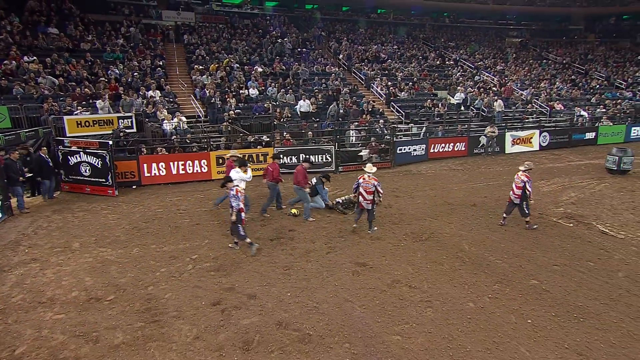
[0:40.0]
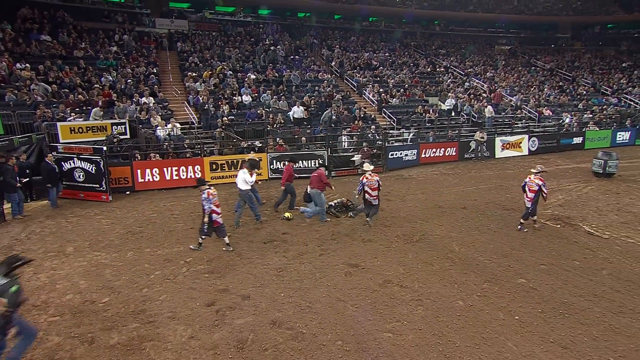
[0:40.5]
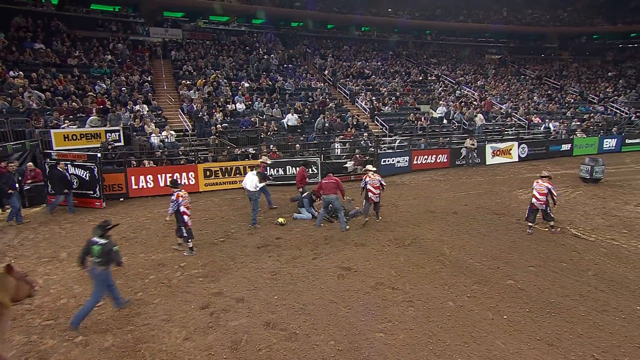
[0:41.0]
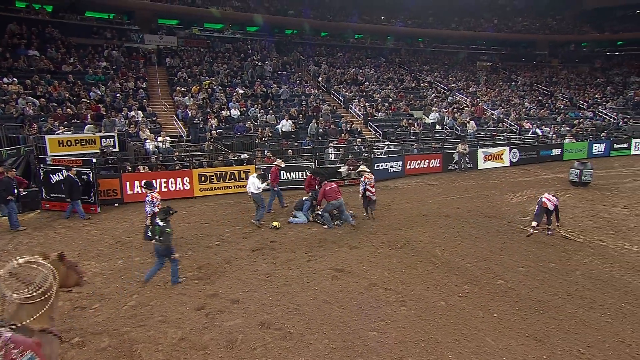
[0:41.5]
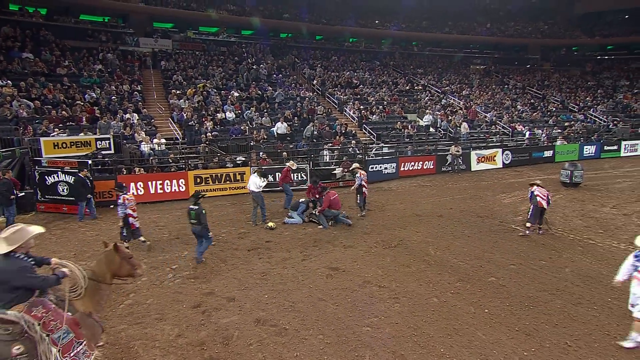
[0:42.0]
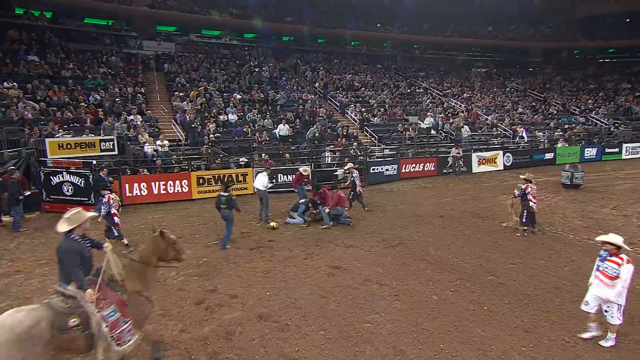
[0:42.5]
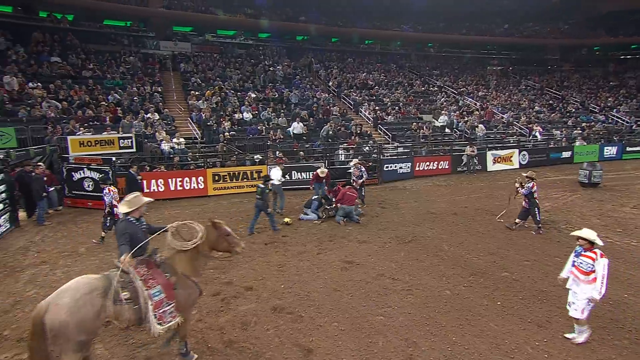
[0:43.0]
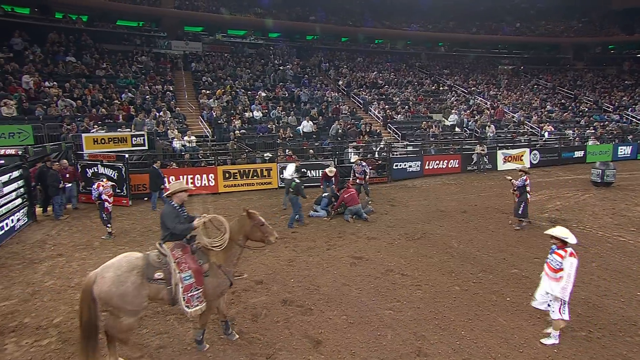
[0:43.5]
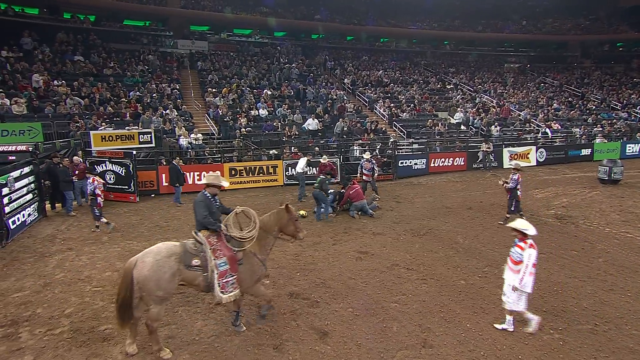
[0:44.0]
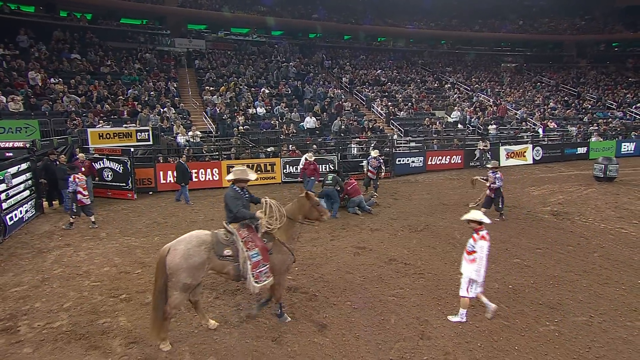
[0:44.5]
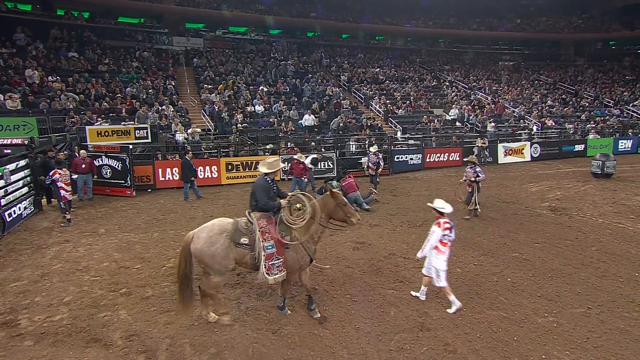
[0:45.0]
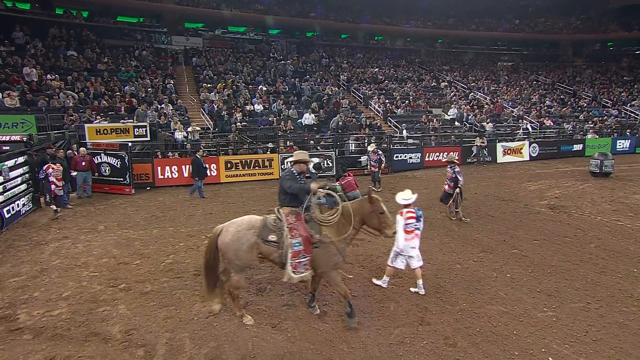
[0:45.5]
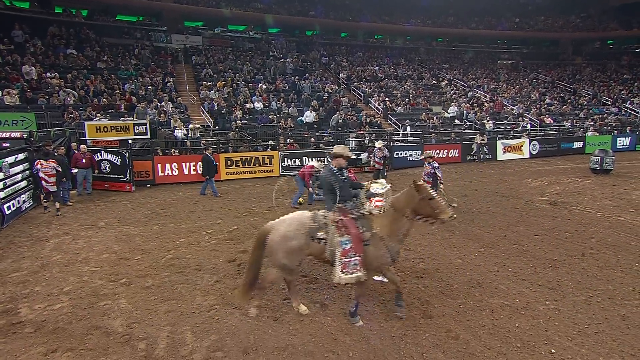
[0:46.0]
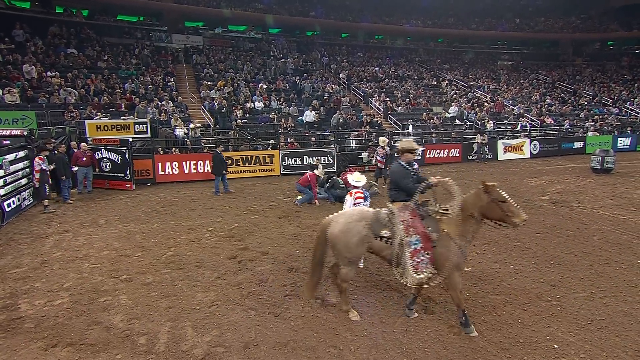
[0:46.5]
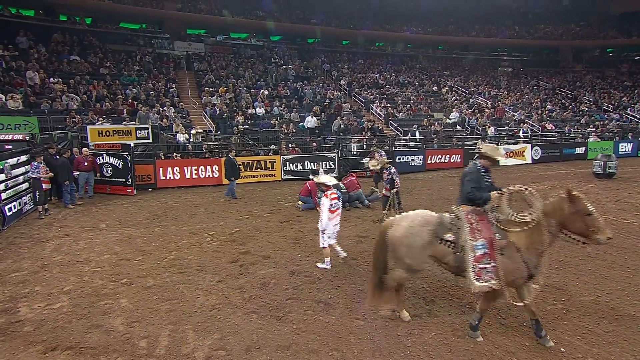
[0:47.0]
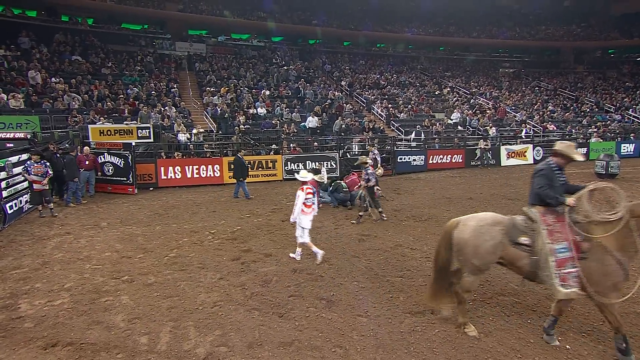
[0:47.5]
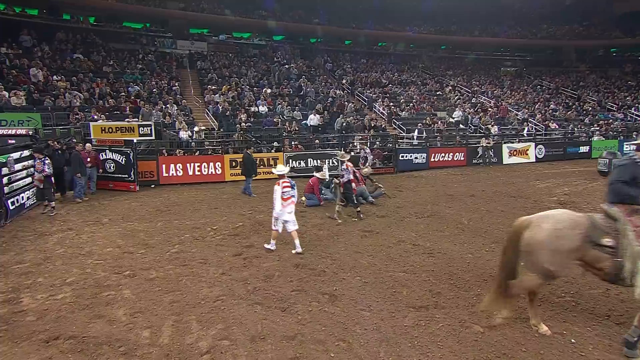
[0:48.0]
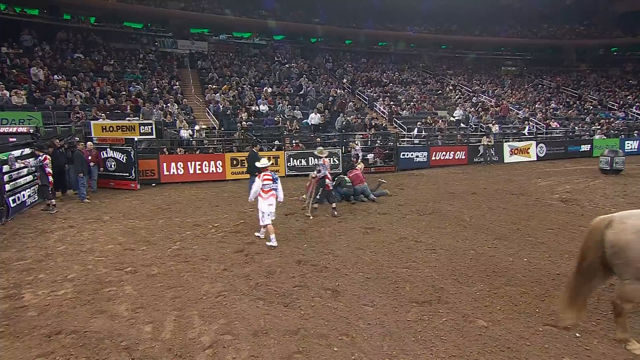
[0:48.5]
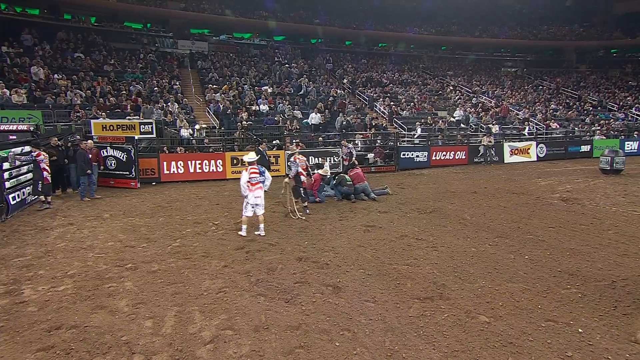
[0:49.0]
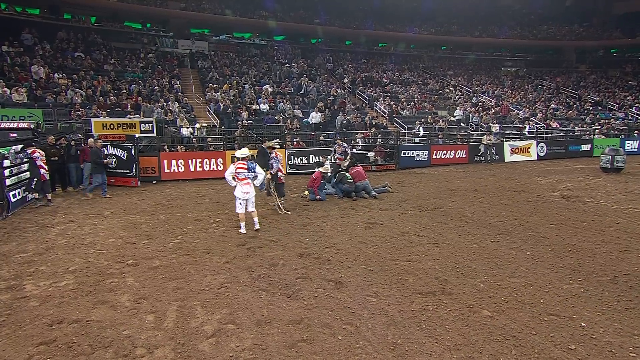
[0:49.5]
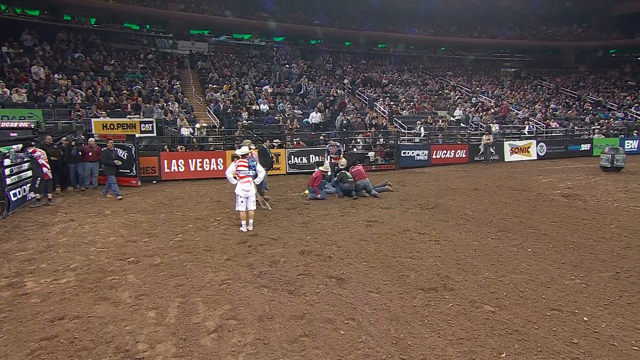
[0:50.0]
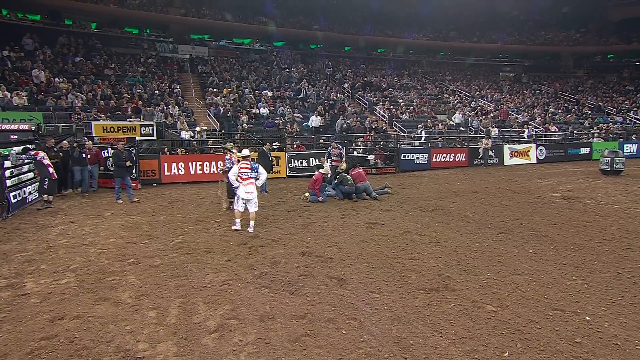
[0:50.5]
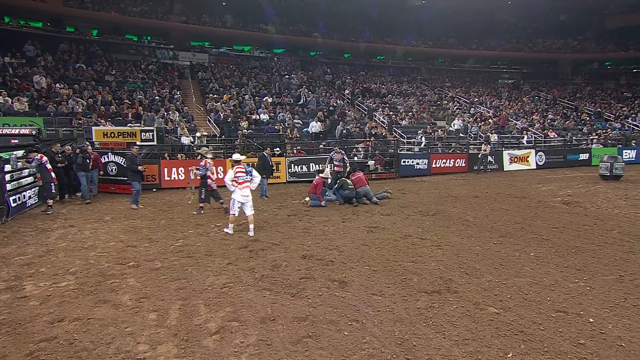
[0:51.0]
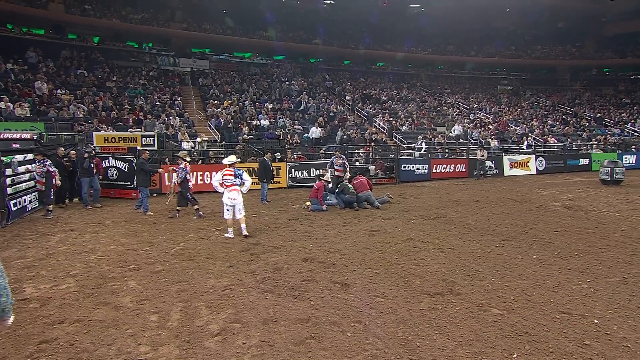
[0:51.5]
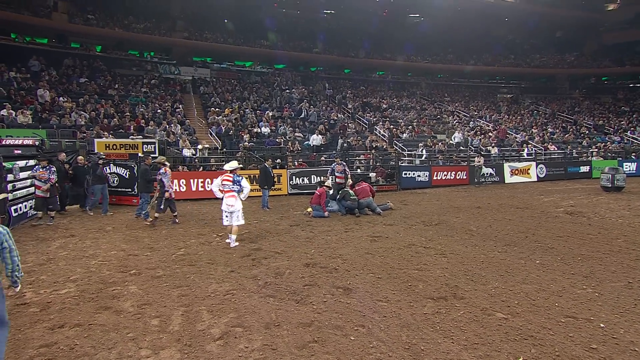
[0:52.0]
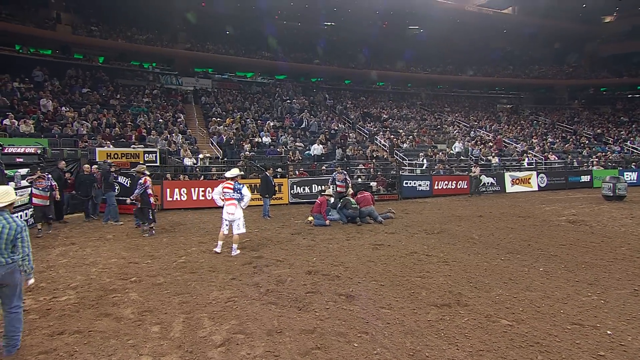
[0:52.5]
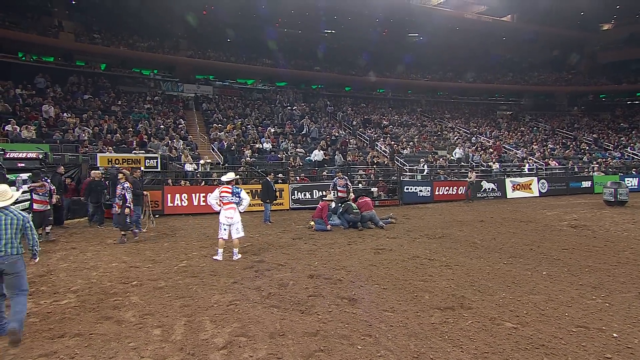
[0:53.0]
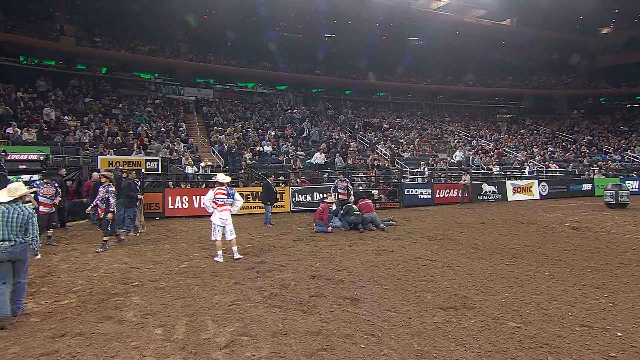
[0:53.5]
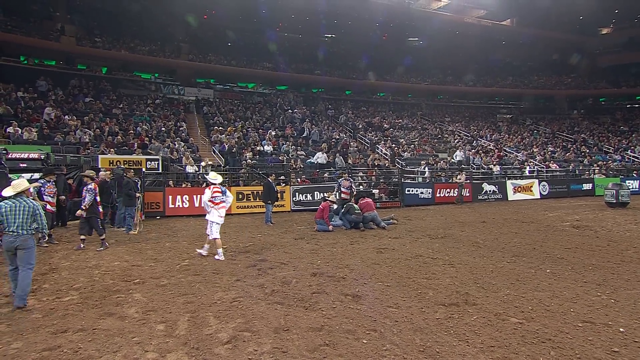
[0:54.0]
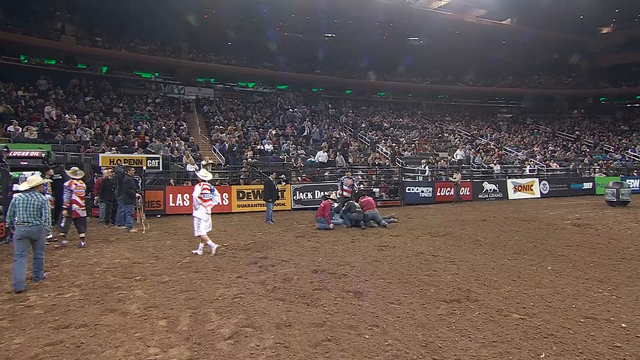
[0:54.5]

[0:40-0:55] A team of people in red shirts and cowboy hats comes out to check on the rider, who is still lying on the floor; this is presumably the medical team. The shot is taken from further away, so the man's condition cannot be seen in much detail. He does not get up, but he moves his legs, indicating he is at least conscious. The fans in the stands are seated, waiting. Advertisements visible include Sonic, Cooper Tires, Jack Daniels and Lucas Oil.